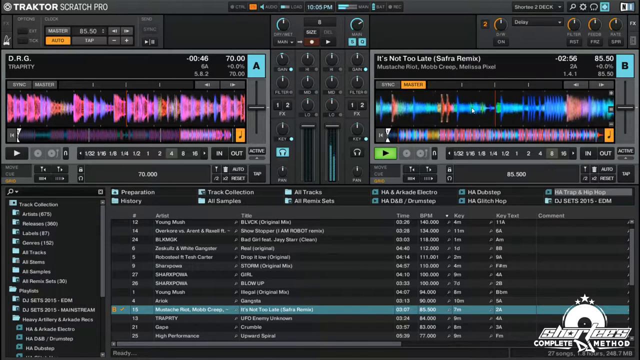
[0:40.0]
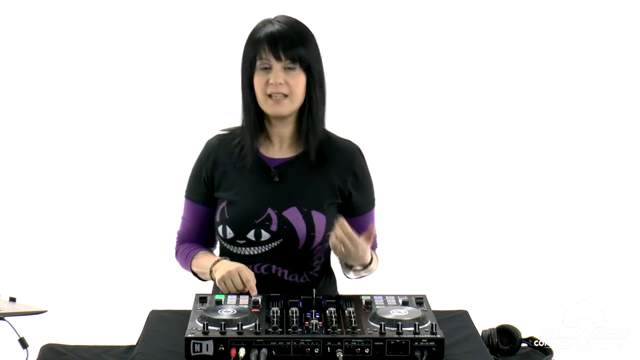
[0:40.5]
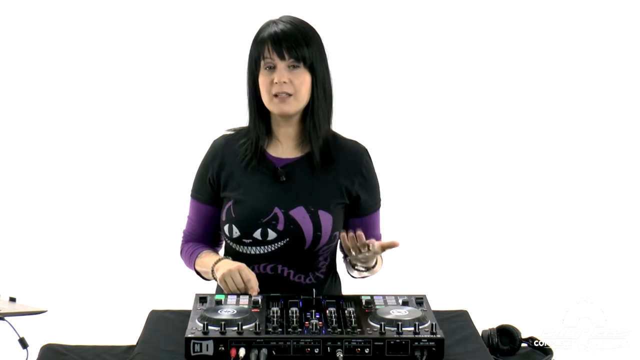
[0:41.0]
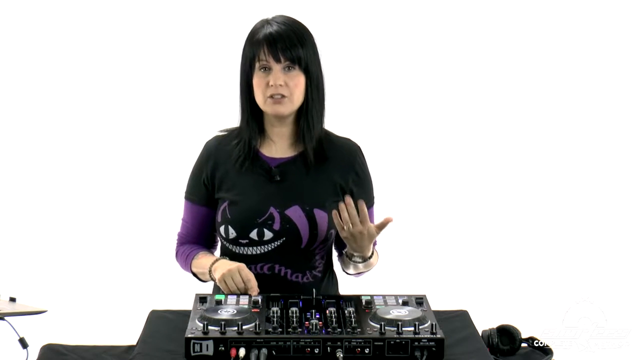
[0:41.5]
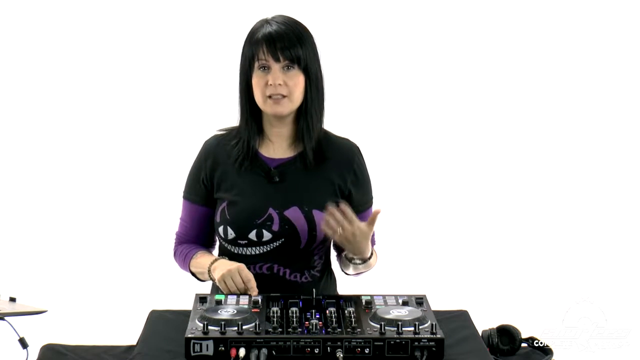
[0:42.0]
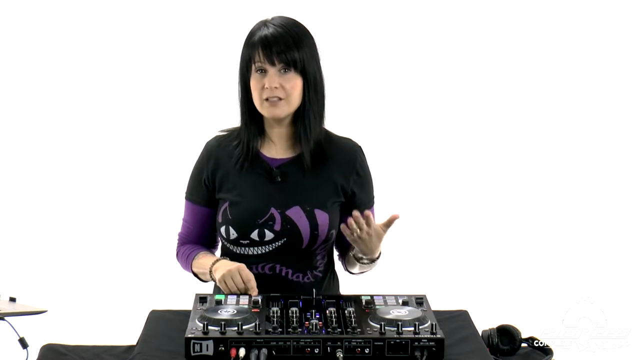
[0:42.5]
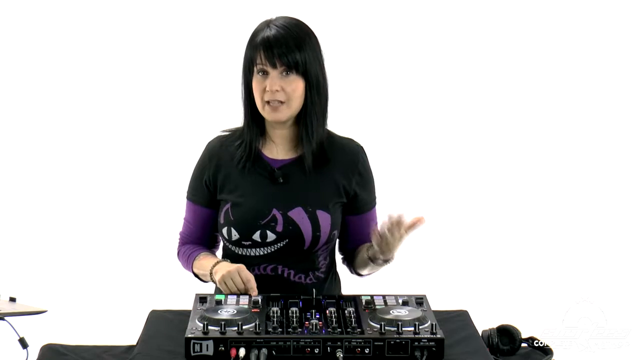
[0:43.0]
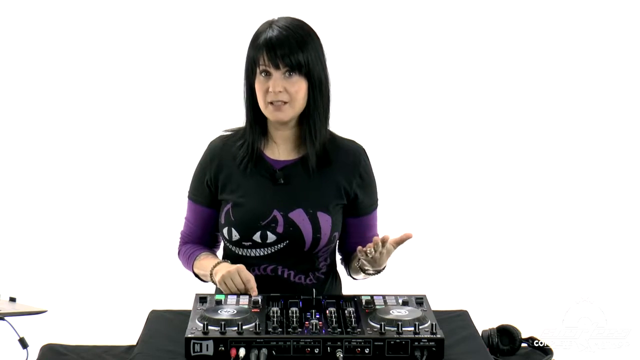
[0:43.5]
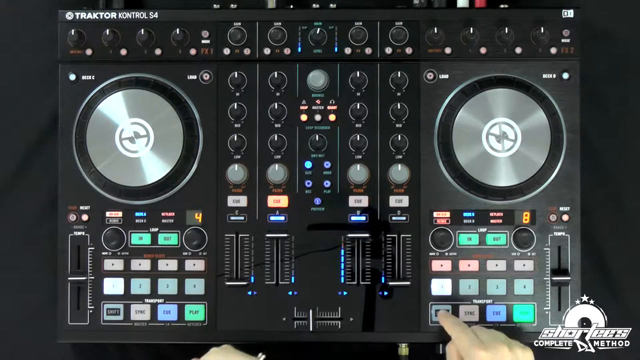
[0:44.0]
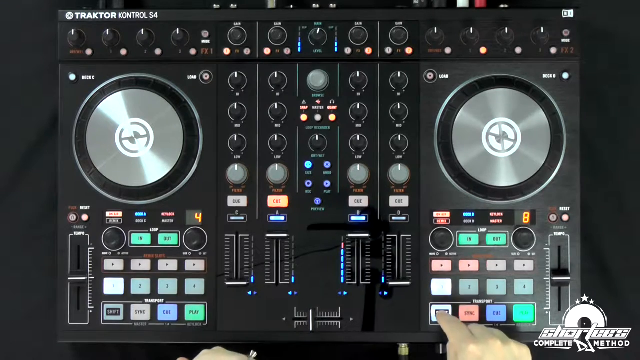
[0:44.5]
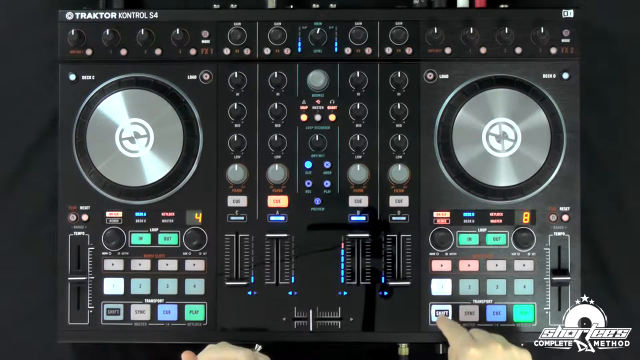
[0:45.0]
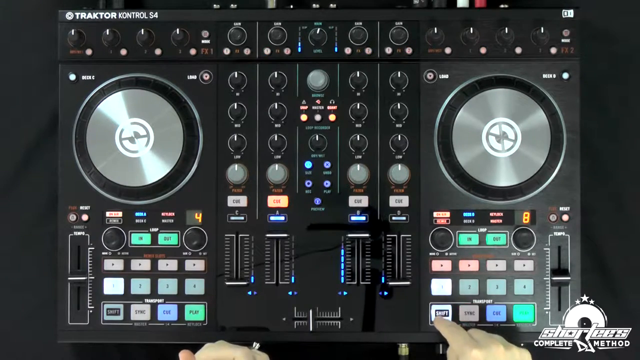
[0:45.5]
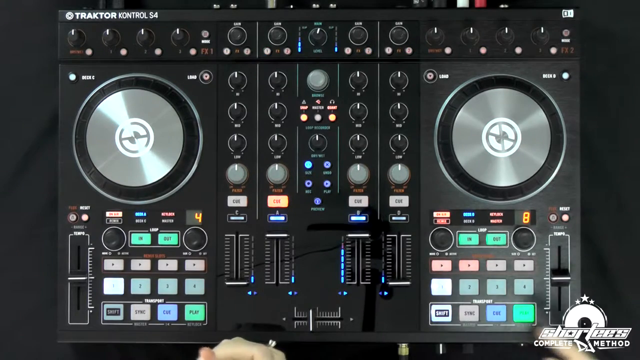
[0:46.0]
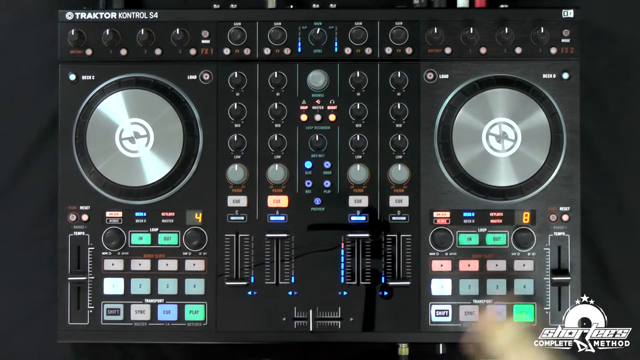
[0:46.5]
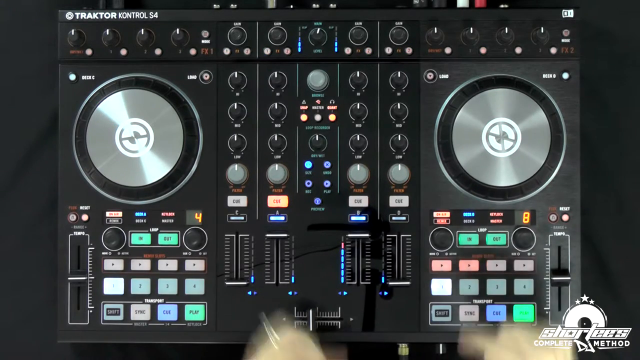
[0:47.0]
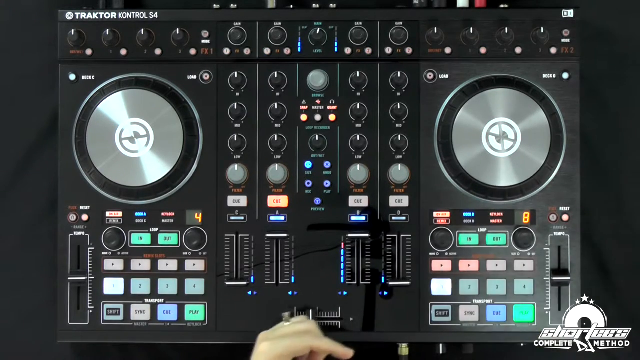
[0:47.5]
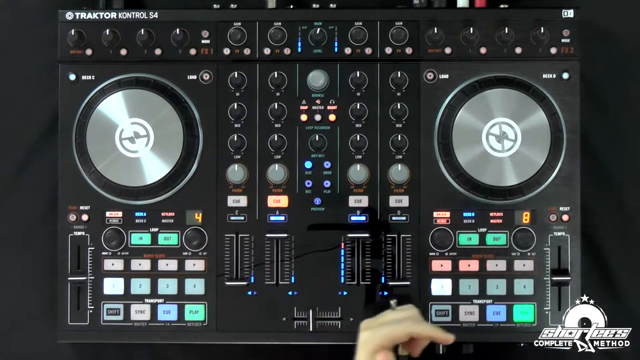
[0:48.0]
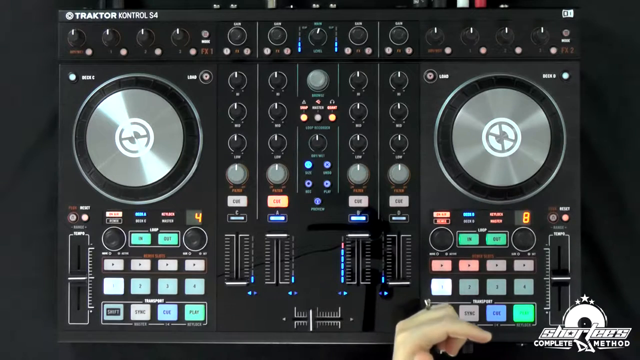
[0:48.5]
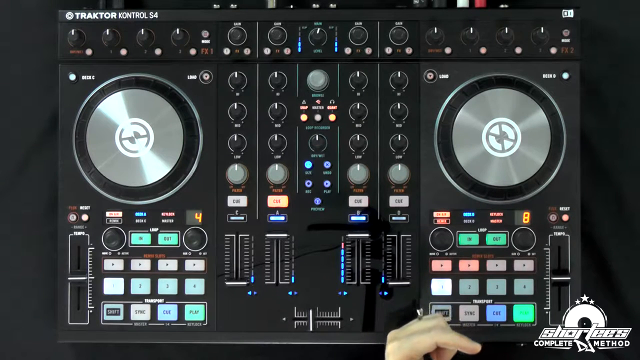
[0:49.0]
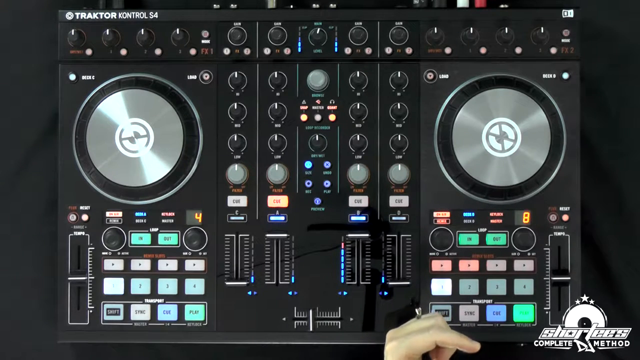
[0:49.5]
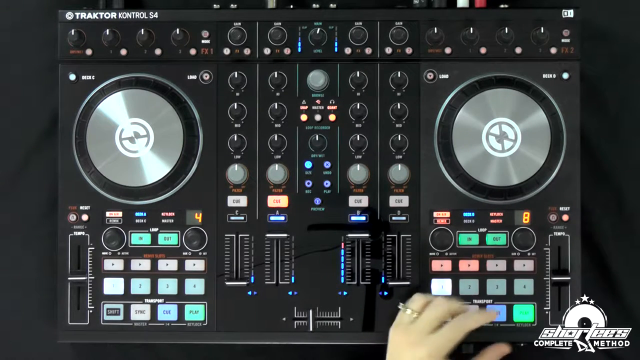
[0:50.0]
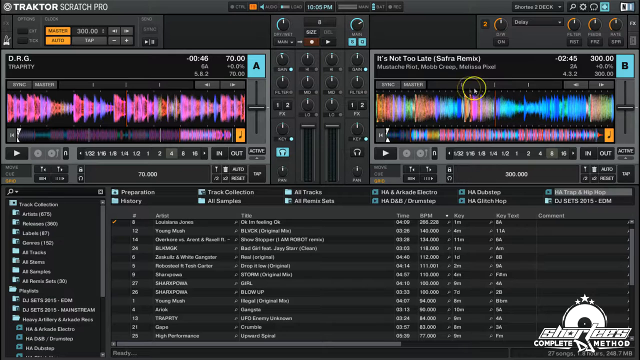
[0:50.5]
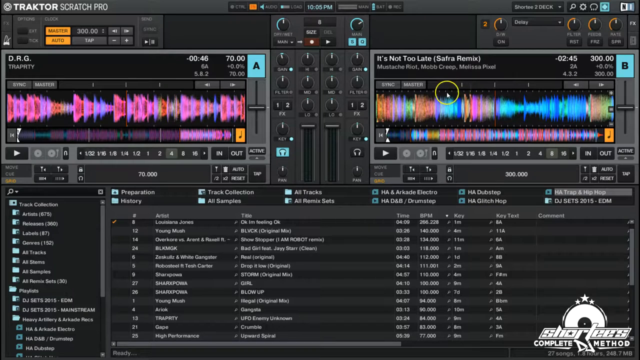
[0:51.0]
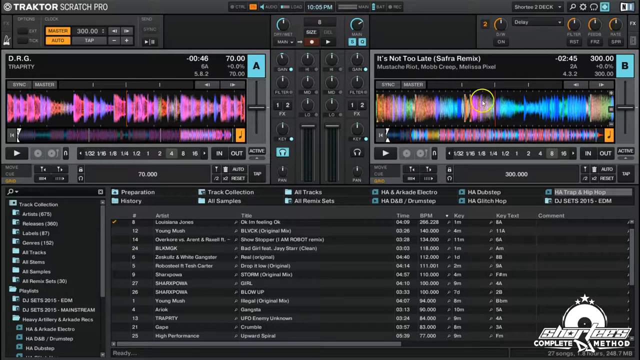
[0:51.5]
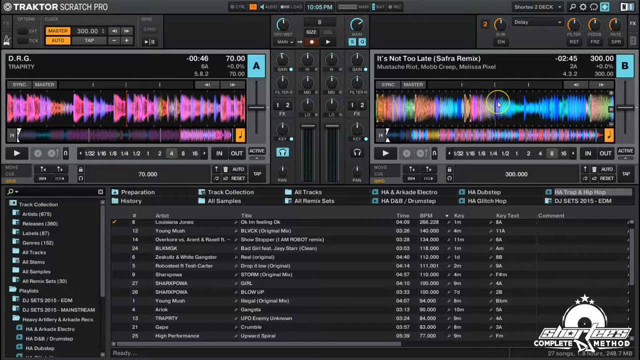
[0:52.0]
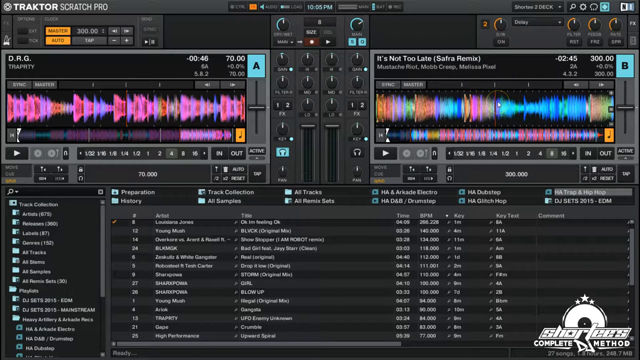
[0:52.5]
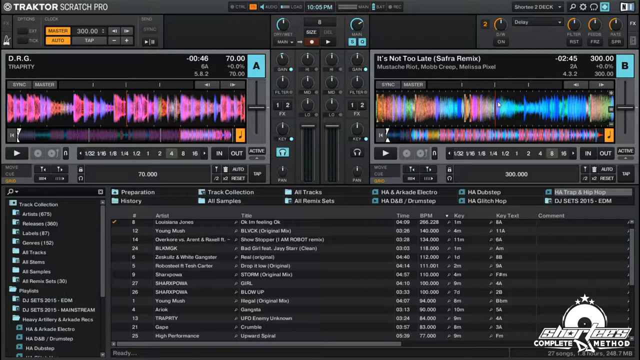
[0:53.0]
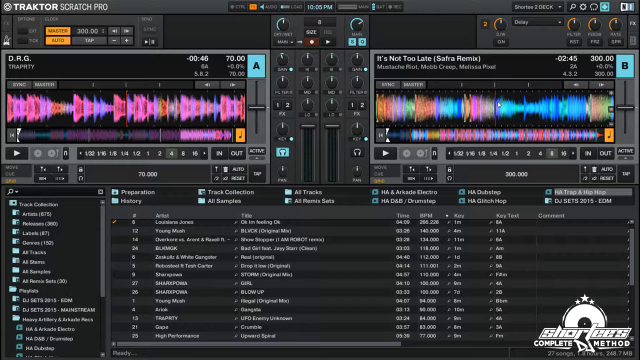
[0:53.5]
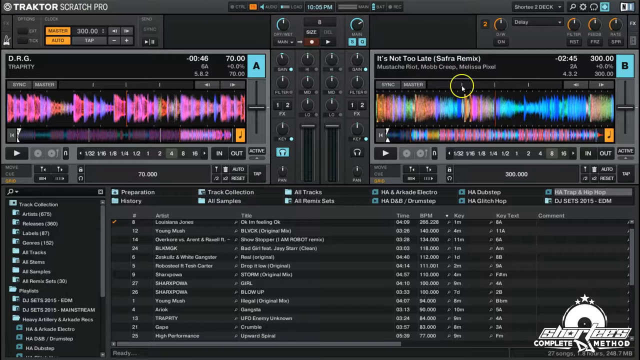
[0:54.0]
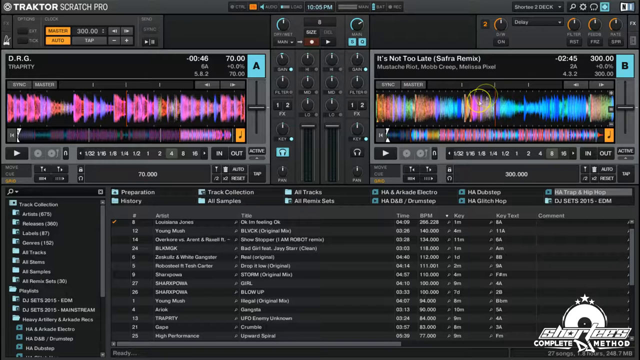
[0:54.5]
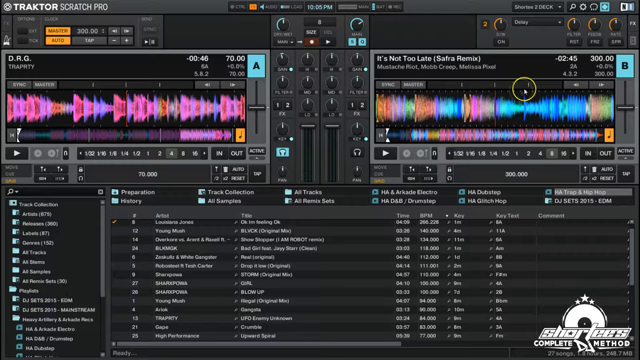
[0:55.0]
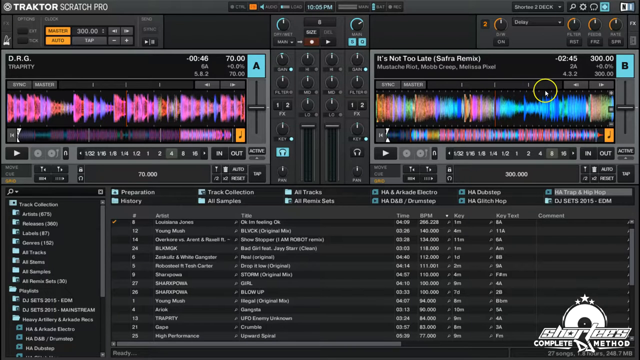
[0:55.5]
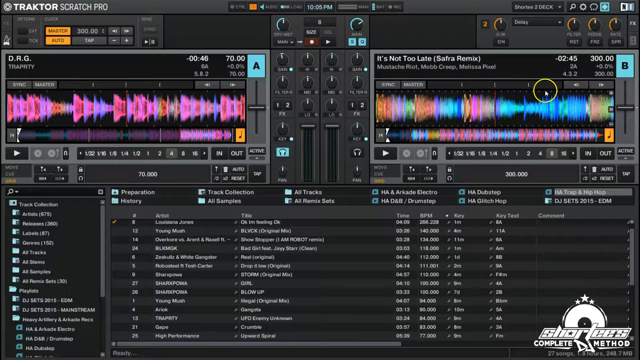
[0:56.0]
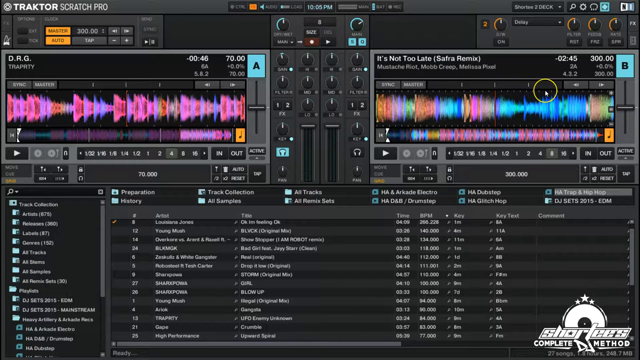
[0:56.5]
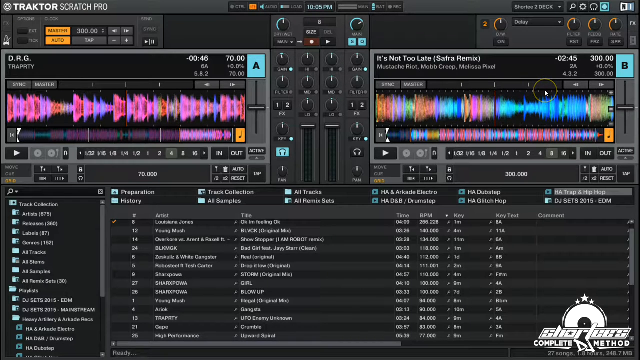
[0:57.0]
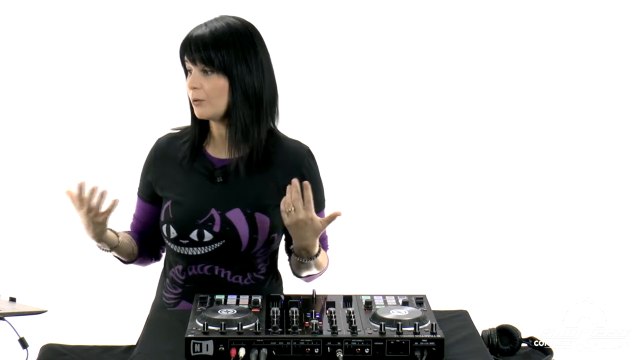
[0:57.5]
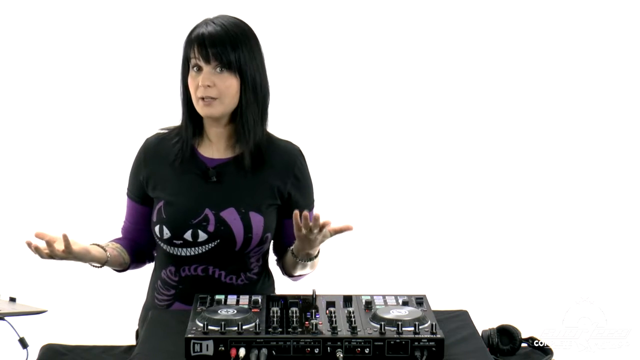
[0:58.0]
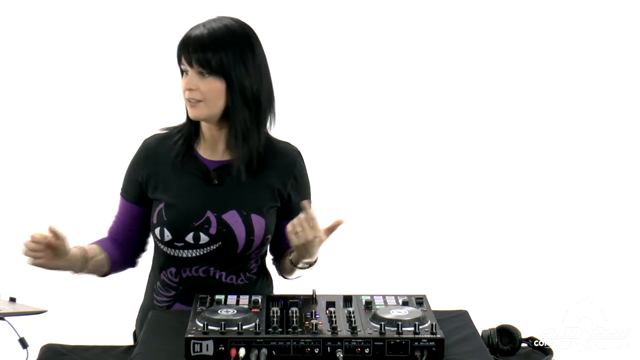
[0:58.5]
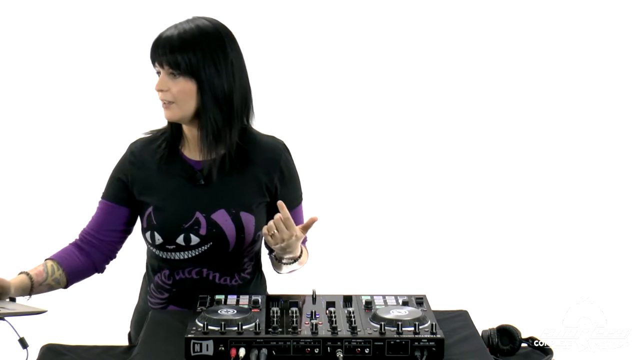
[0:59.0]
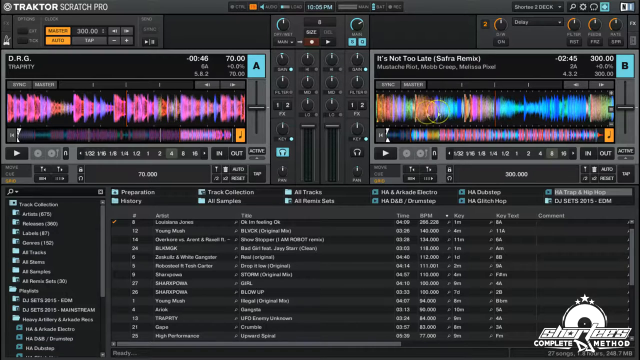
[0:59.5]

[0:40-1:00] A close-up shows the digital screen for a mixing board, named "Traktor Scratch Pro," with a watermark reading "Shortee's complete DJ method" at the bottom right. The screen offers ways to alter and change sound by pressing and moving different buttons. The smaller letters are not legible. Two boxes, in the upper right and upper left, contain different colors and designs that possibly indicate the frequency of the sound waves.